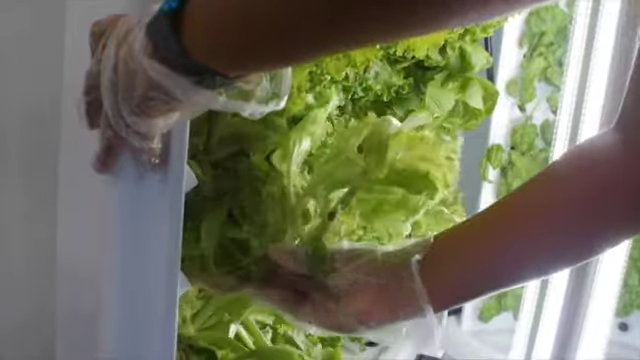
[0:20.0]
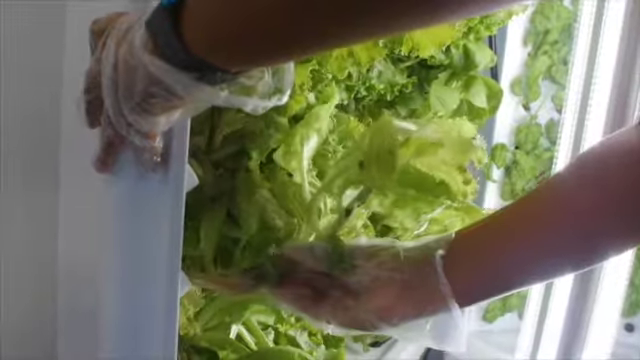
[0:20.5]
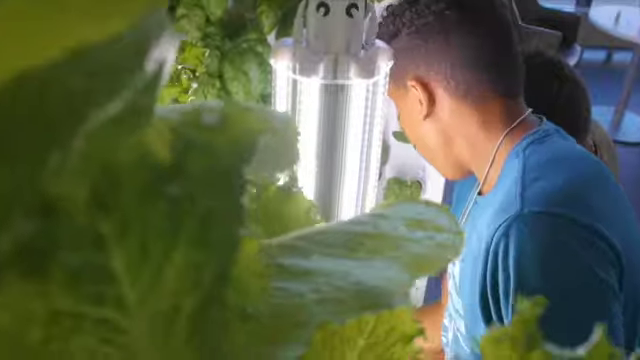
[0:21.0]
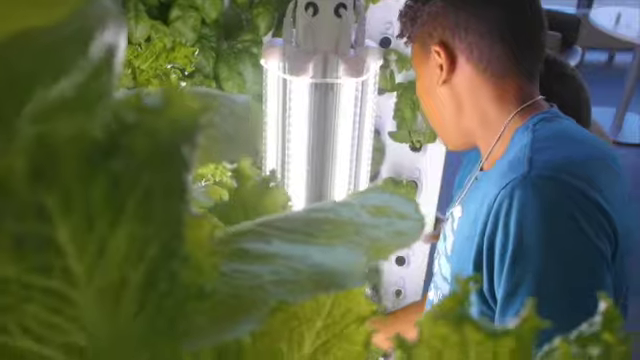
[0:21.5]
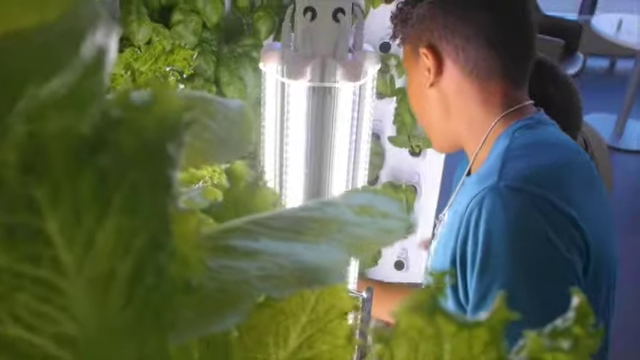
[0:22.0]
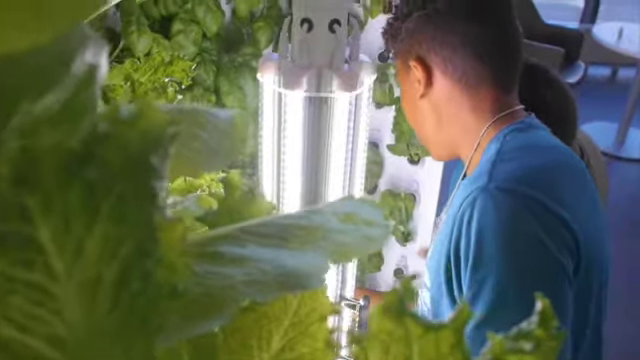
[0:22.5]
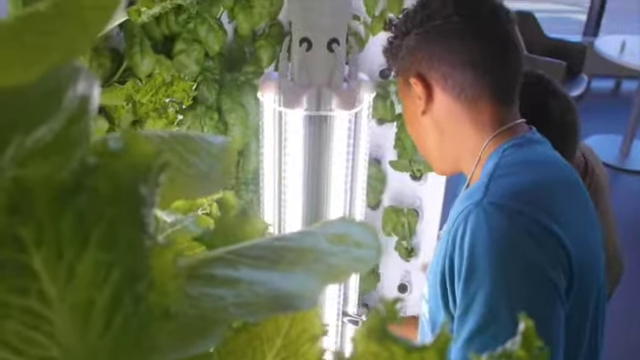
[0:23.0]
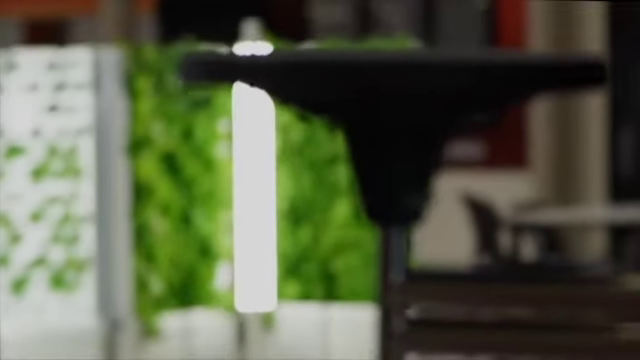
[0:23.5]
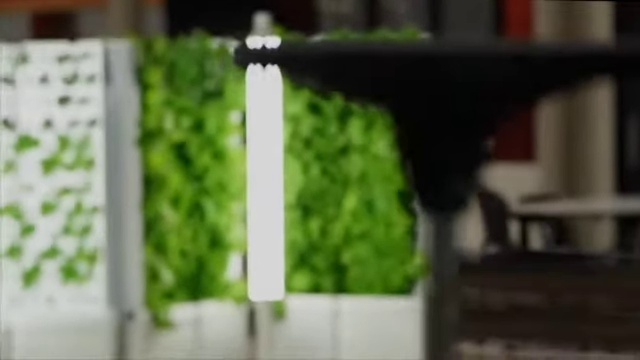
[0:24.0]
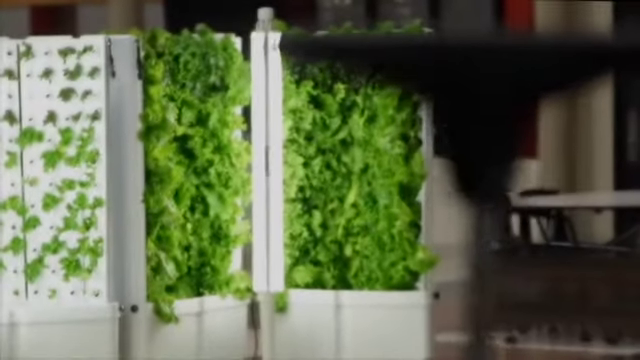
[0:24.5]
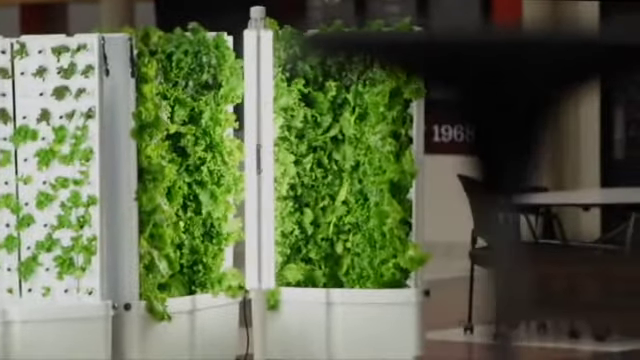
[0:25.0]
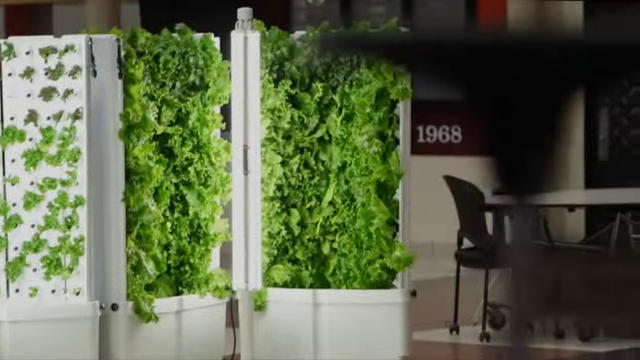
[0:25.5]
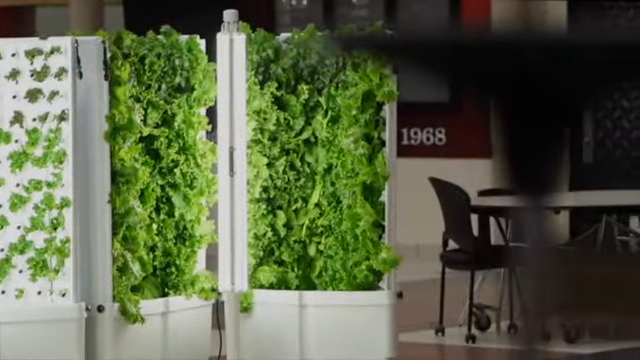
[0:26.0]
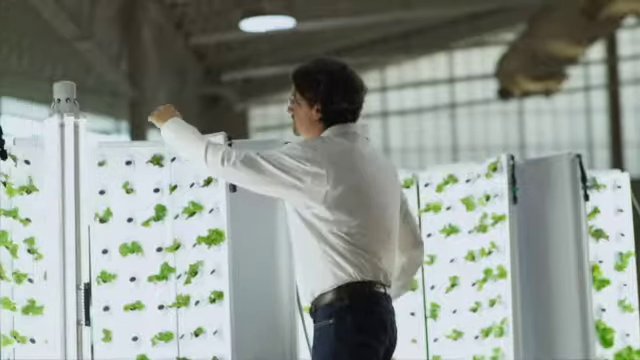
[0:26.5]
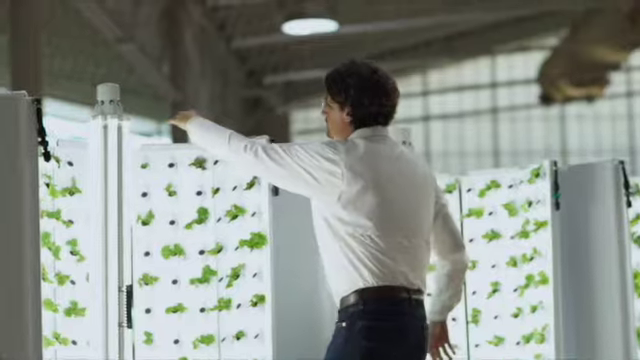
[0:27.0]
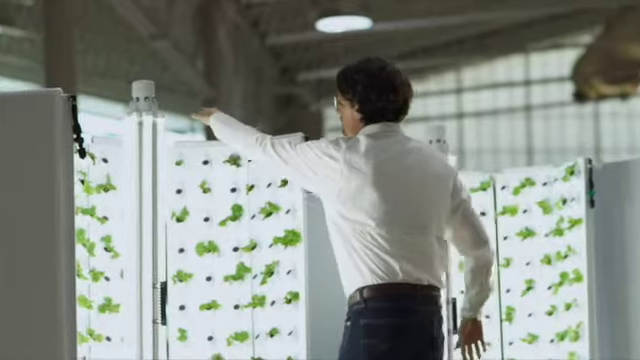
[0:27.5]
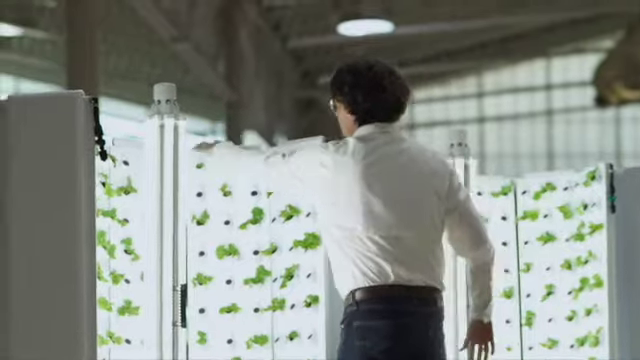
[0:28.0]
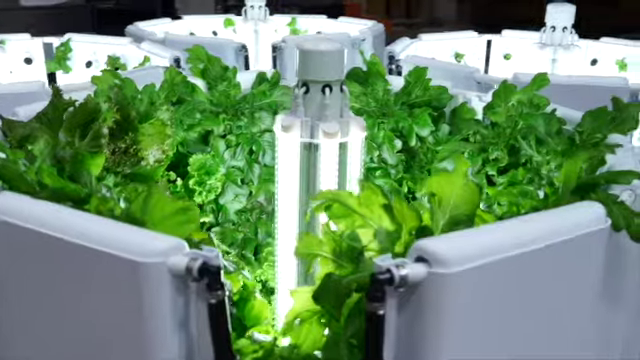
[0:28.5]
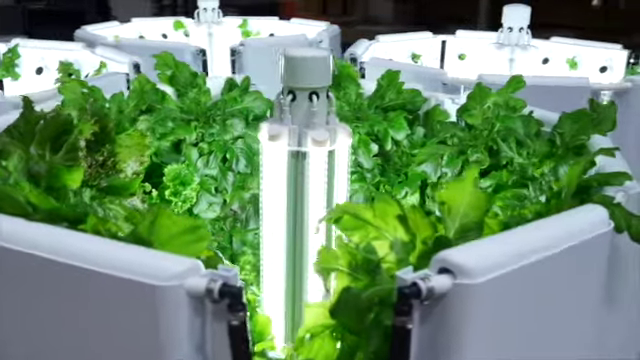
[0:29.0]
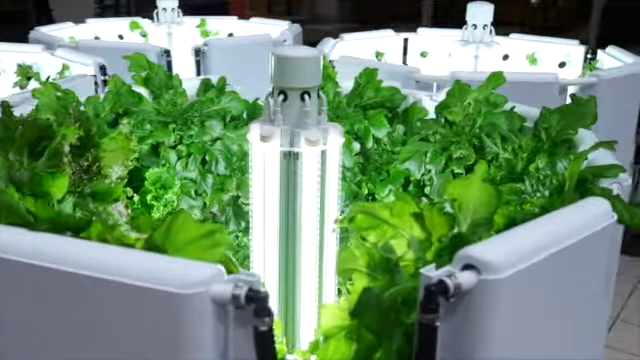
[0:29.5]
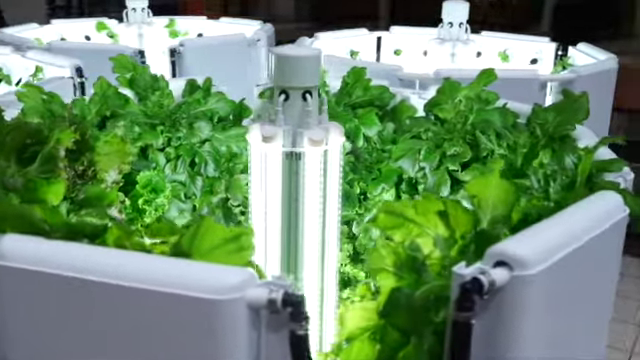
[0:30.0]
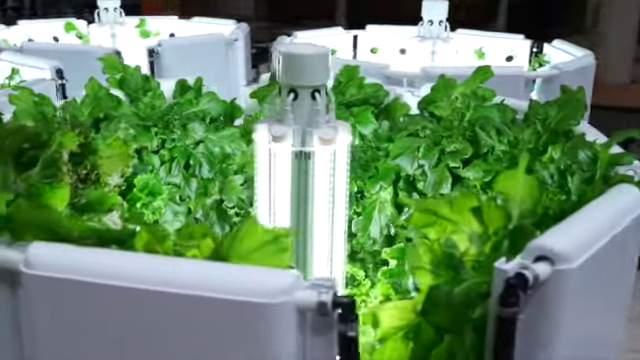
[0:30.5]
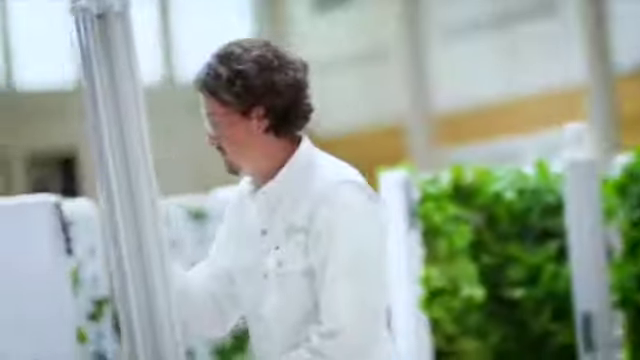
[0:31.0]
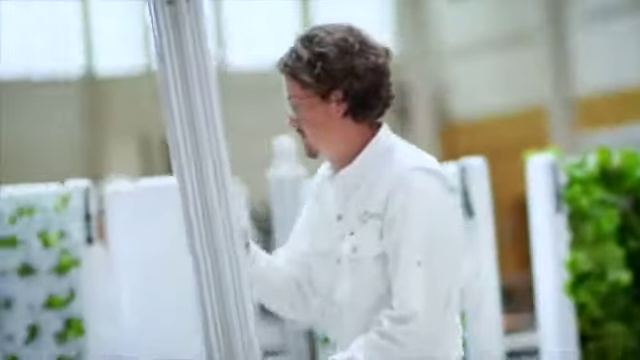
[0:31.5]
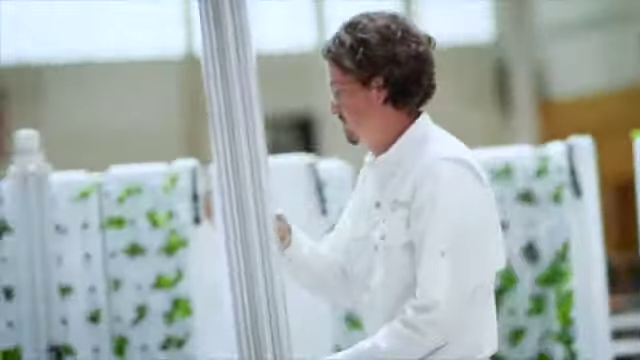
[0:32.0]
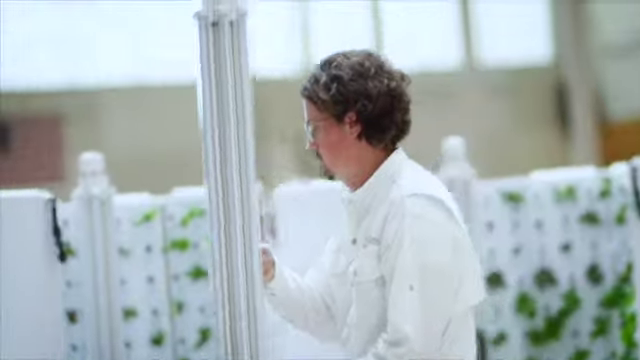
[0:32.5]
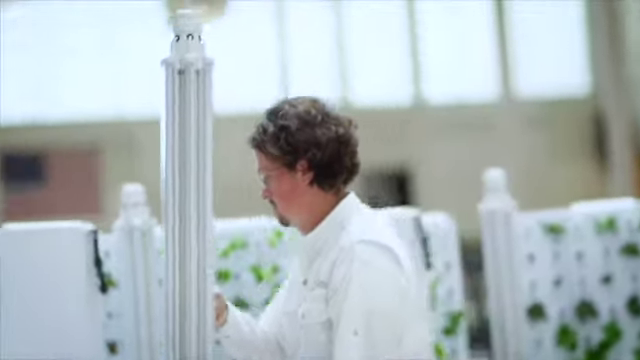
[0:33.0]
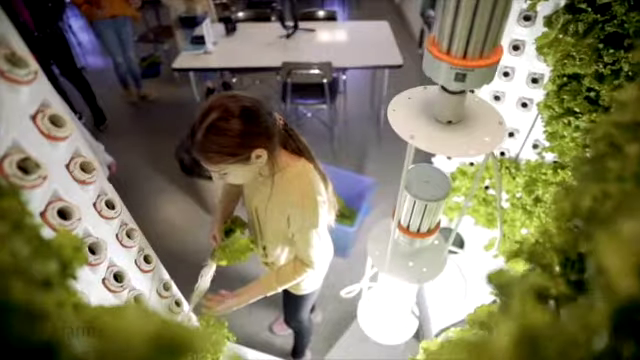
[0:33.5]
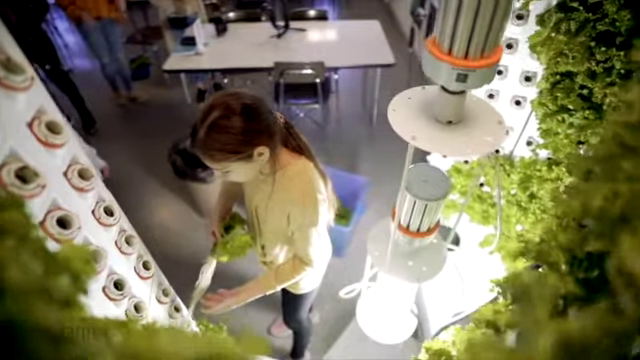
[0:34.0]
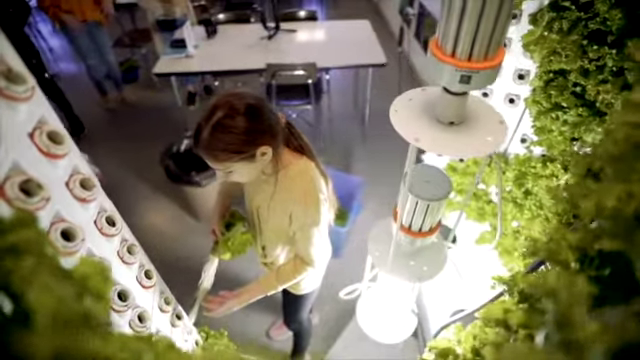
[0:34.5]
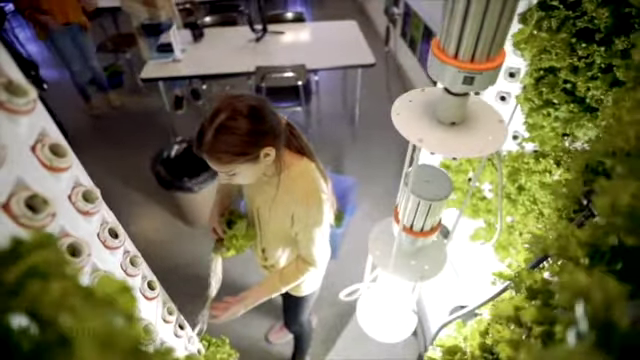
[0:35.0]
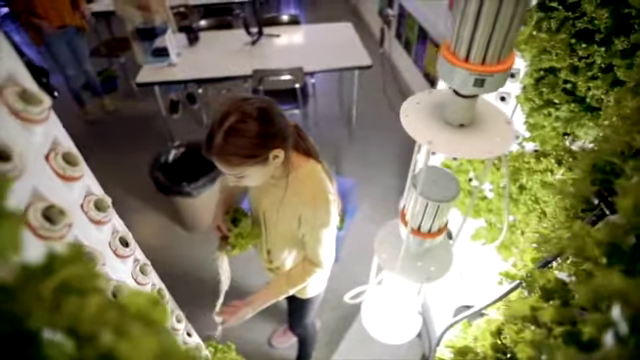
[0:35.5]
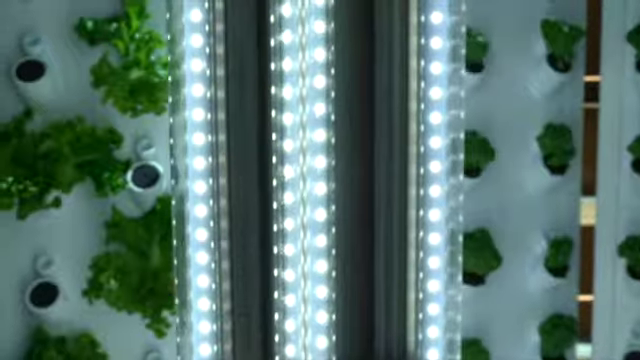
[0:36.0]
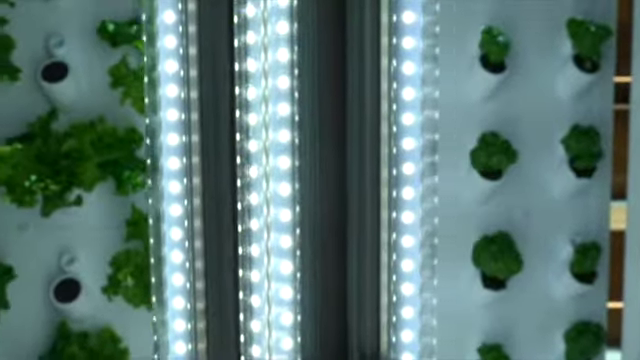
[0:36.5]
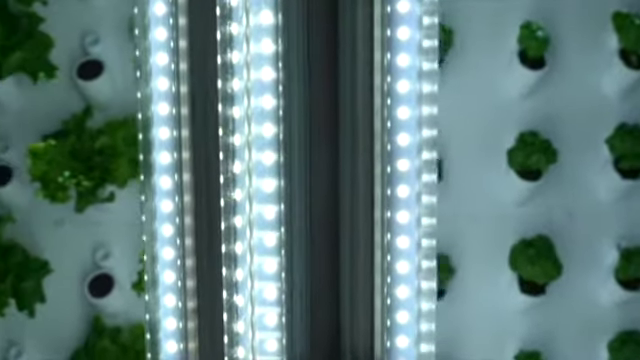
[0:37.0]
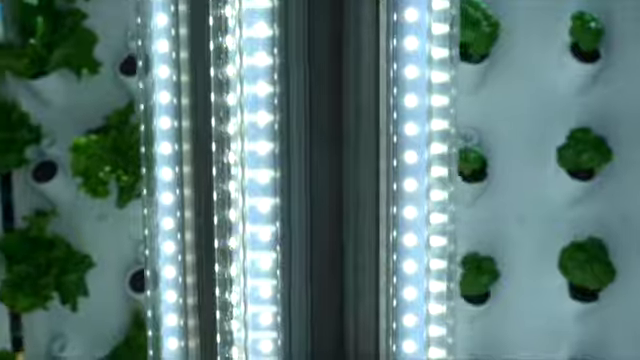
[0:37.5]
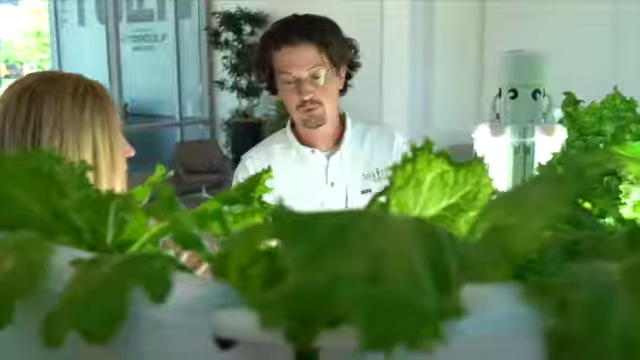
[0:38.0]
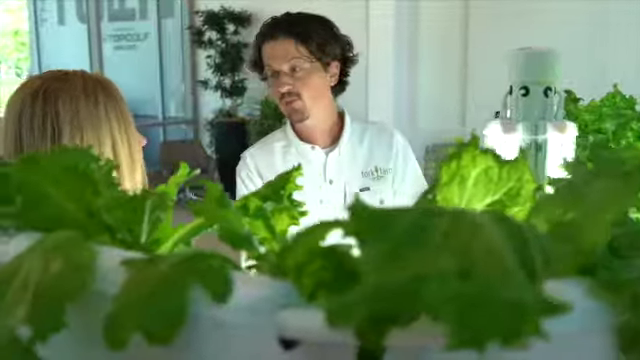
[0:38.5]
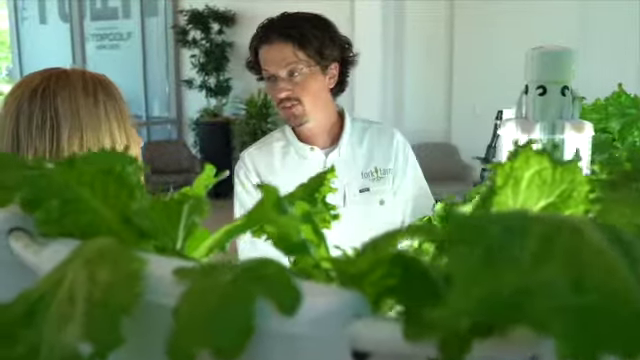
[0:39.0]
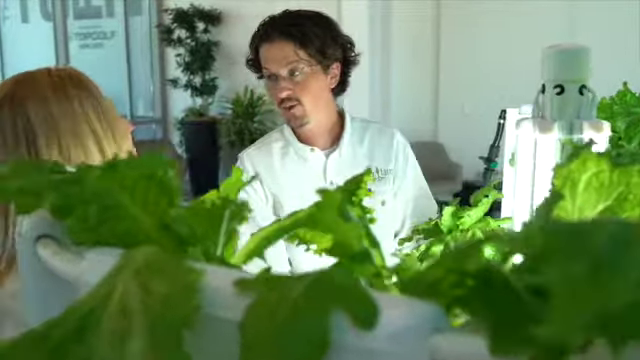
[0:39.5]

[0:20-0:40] The tall white objects continue to appear, with several green leafy objects growing out of them. A young man, seen in side profile, inspects the green leafy objects on the white objects. In the middle of these white objects there are strong beams of very white artificial light. A slow-motion shot shows a man wearing eyeglasses and a white long-sleeved shirt rolling out one of these objects with the white lights on it. Several more shots show people working in this setting, making sure everything is set up well. The video is in a rectangular frame and is recorded indoors, where everything is clear and visible due to the large amount of artificial light.